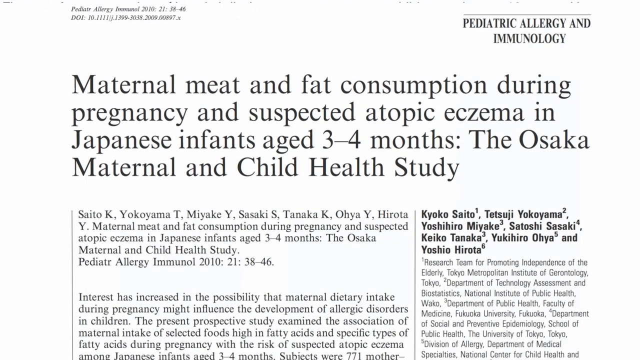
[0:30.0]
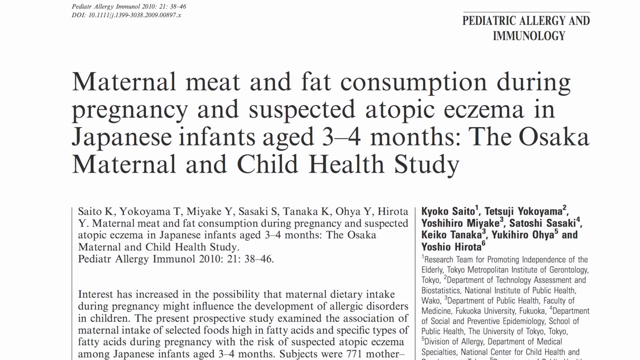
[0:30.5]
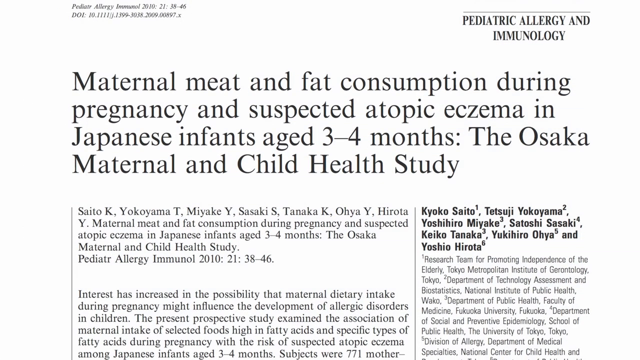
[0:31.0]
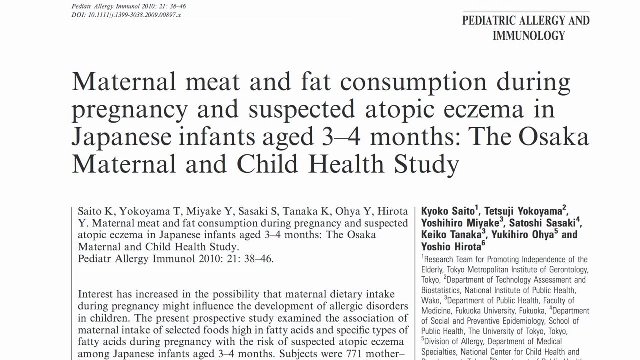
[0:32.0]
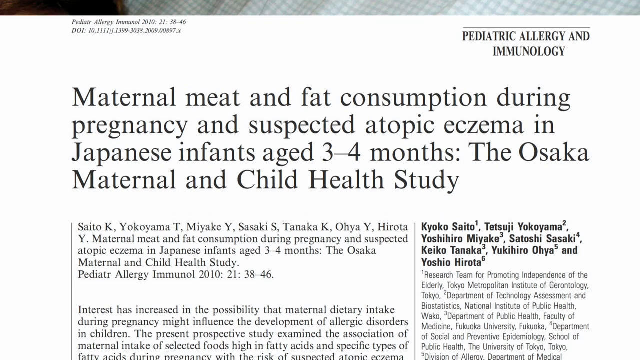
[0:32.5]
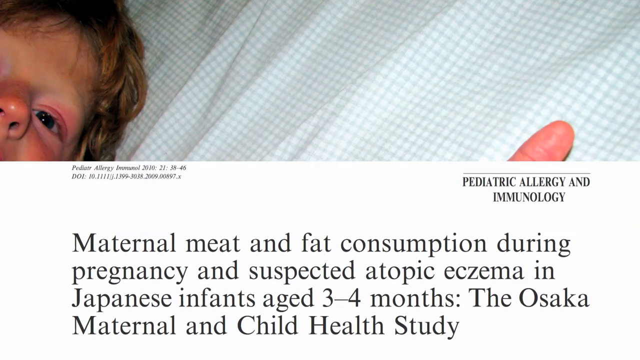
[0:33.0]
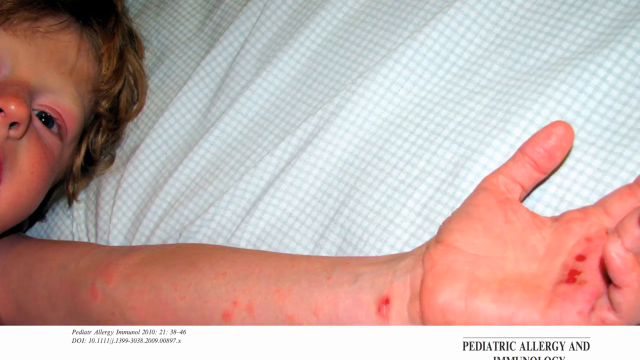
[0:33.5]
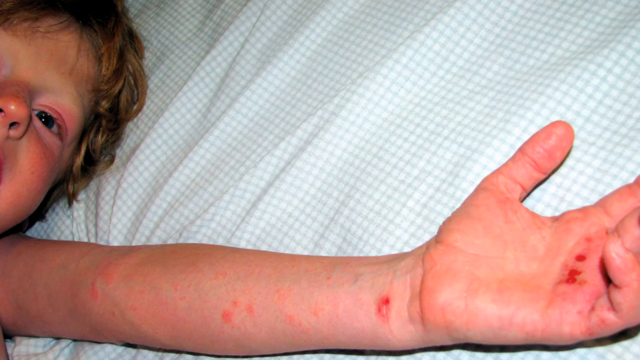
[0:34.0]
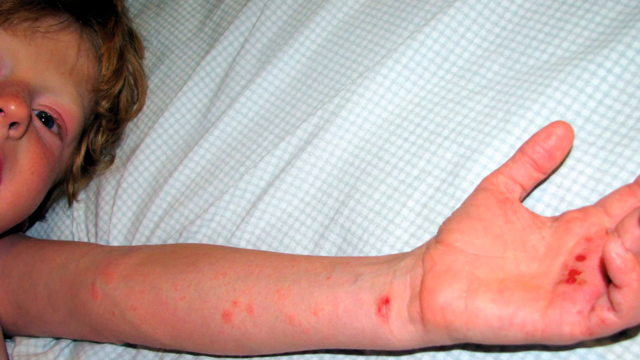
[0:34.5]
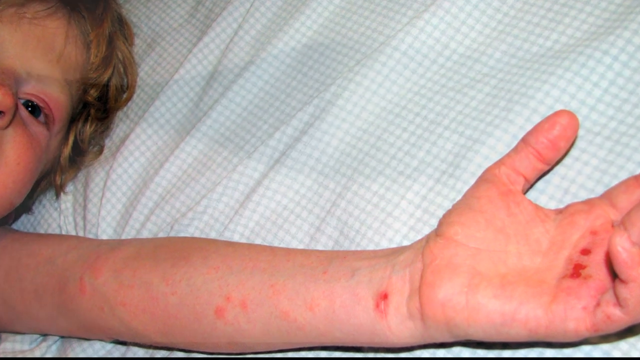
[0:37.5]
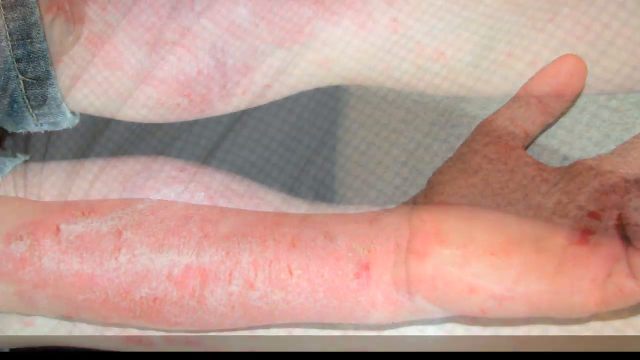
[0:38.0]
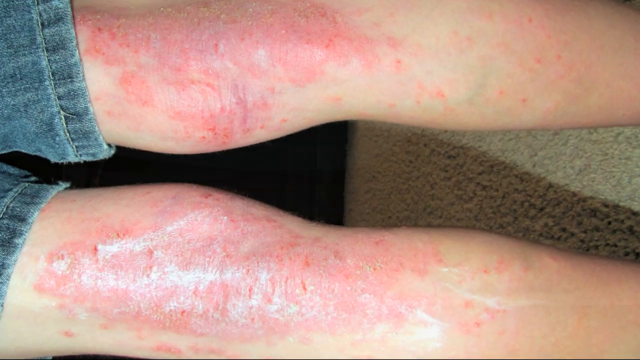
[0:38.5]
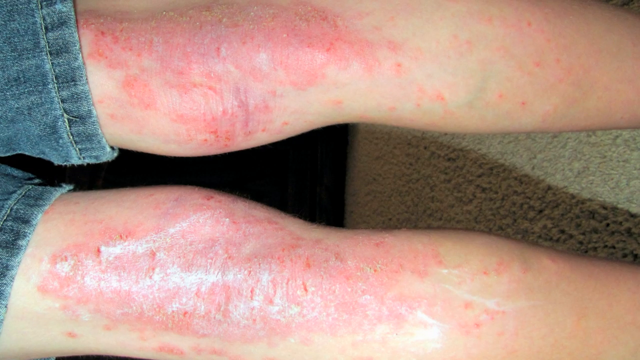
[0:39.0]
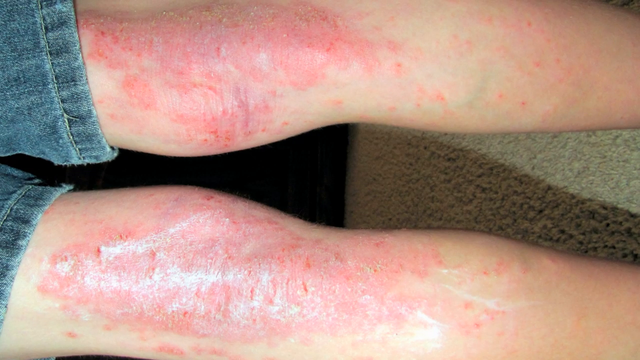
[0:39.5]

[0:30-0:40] The top of a journal page relating to allergies increasing is shown. In the top left-hand corner is the journal reference in small italic lettering, and in the top right-hand corner, in capital letters, is "paediatric allergy and immunology." The main headline reads "maternal meat and fat consumption during pregnancy and suspected atopic eczema in Japanese infants aged three to four months the Osaka maternal and child health study." Below it is a main body of text with a subheading summarizing the study, in a Times New Roman font. The video then changes to a photographic image showing part of the head, an eye and the hair of a blonde Caucasian child lying on a pillow. The child's arm is outstretched across the bottom of the photo, and on it are allergy-related sores, likely eczema.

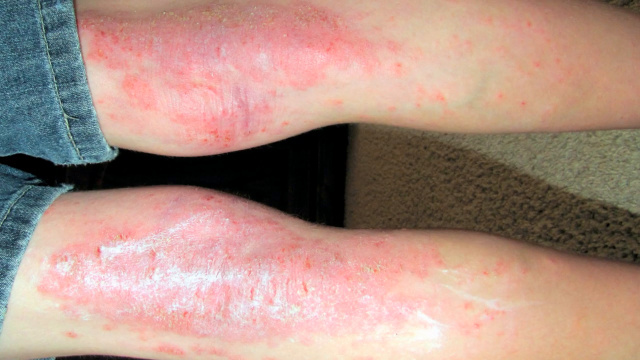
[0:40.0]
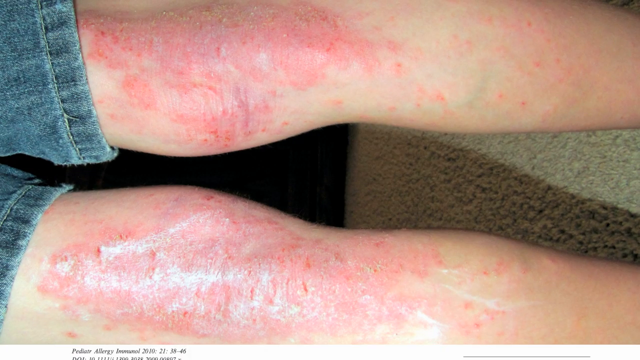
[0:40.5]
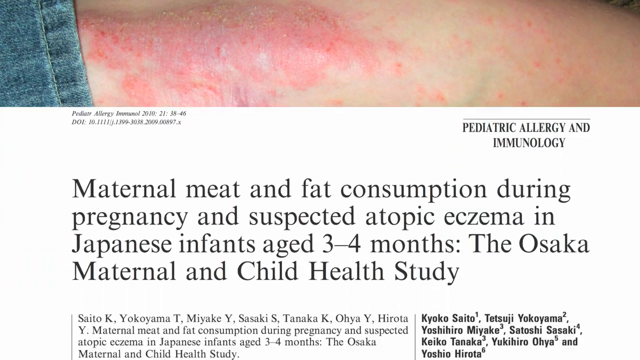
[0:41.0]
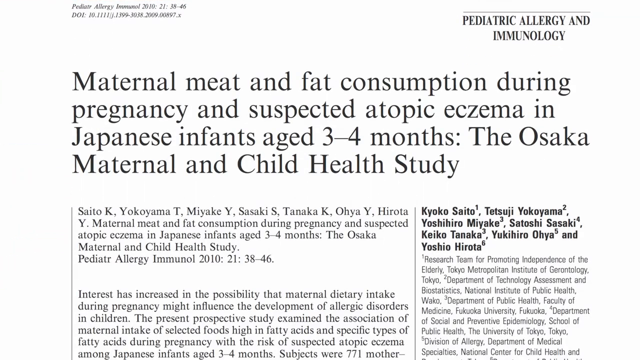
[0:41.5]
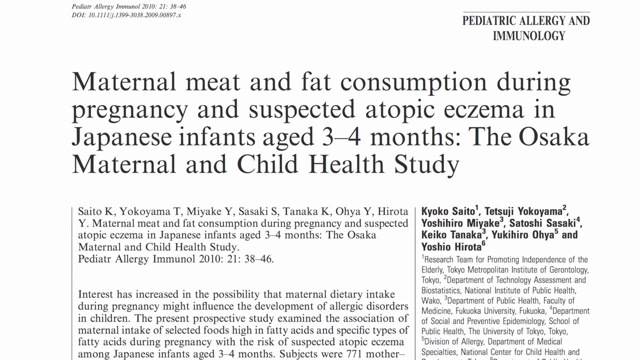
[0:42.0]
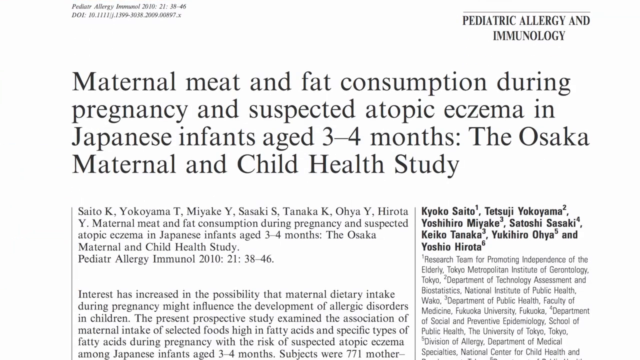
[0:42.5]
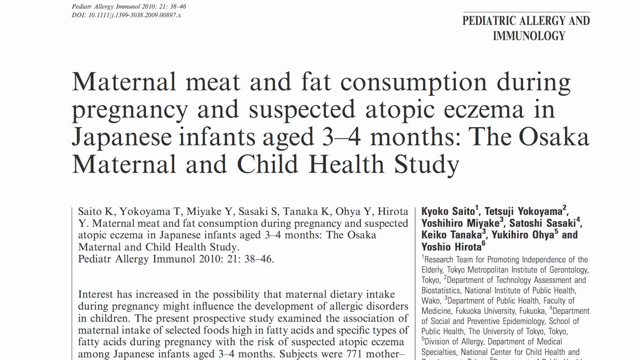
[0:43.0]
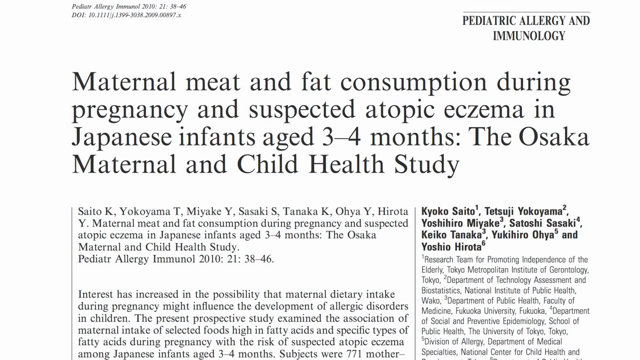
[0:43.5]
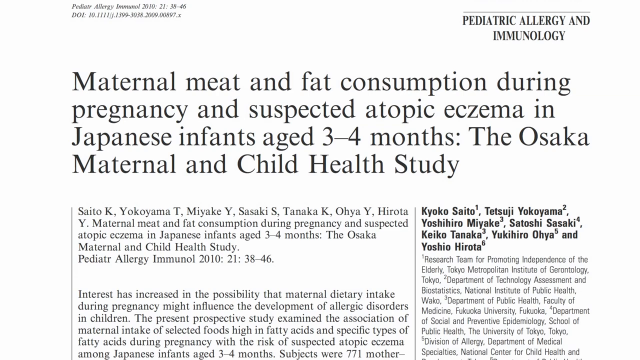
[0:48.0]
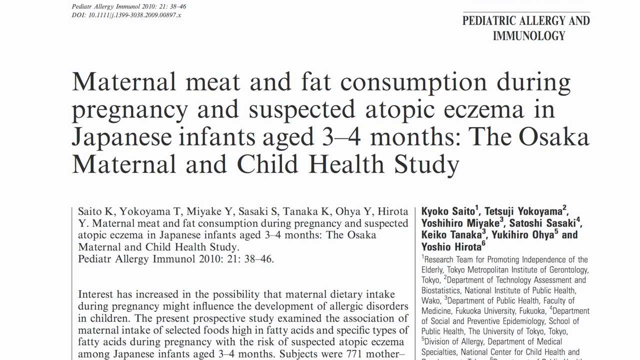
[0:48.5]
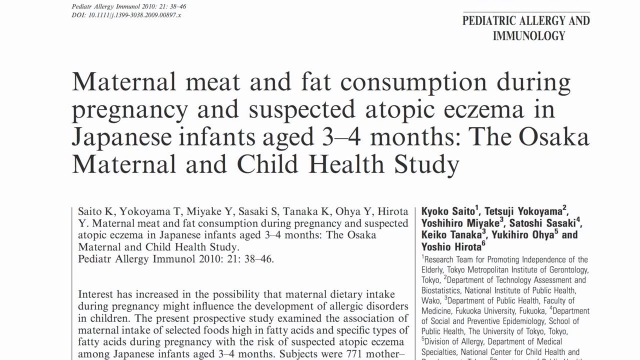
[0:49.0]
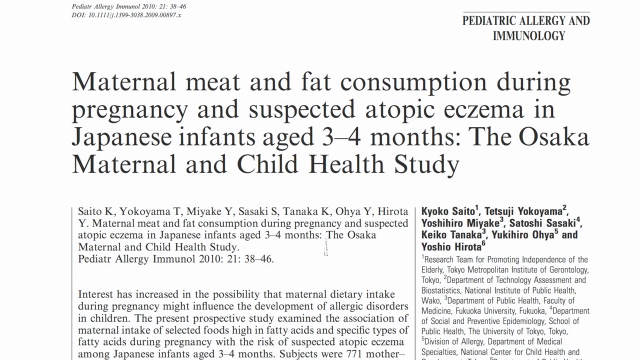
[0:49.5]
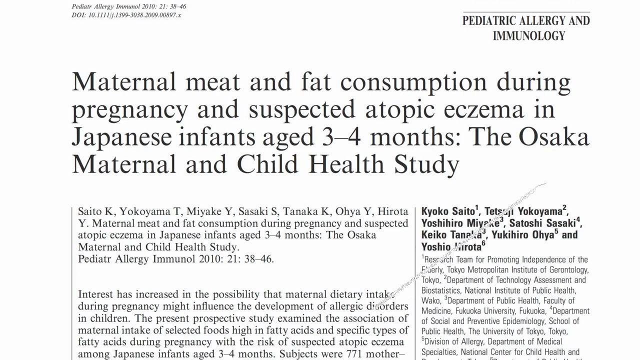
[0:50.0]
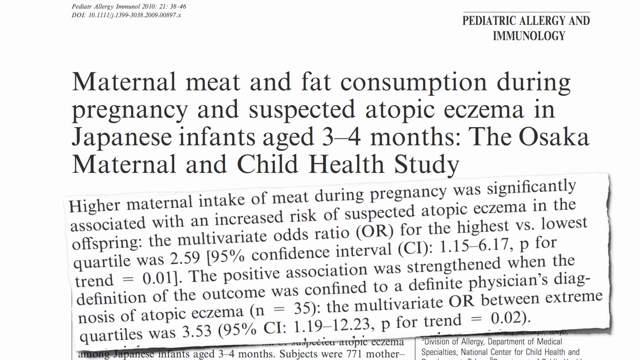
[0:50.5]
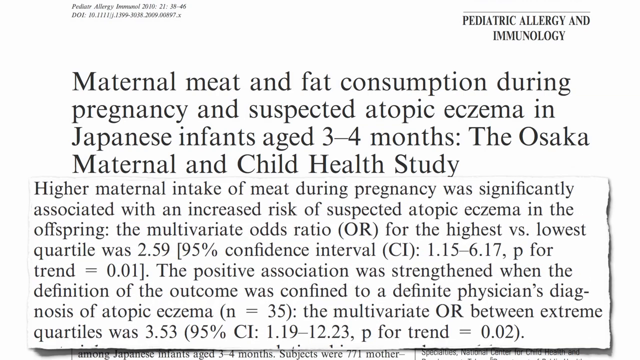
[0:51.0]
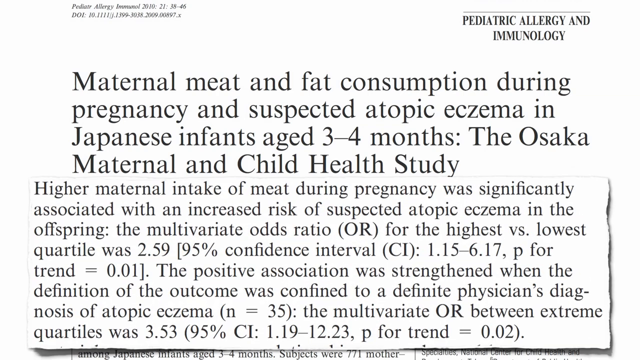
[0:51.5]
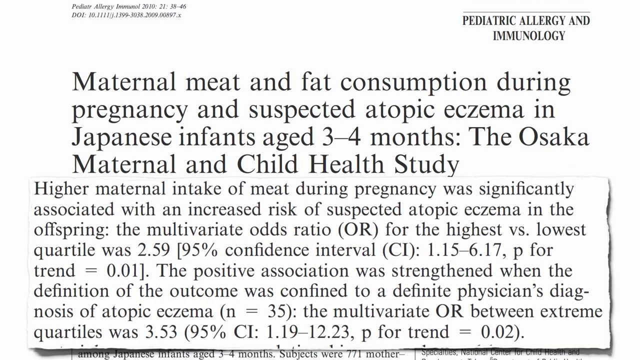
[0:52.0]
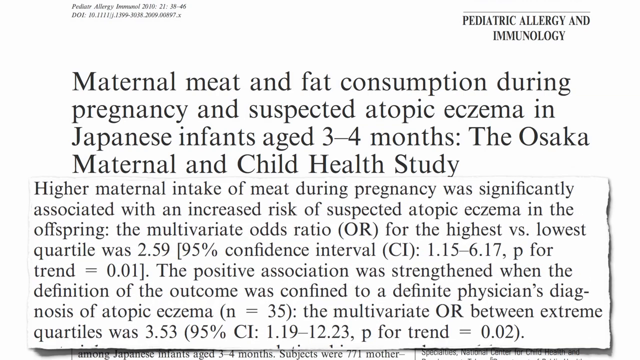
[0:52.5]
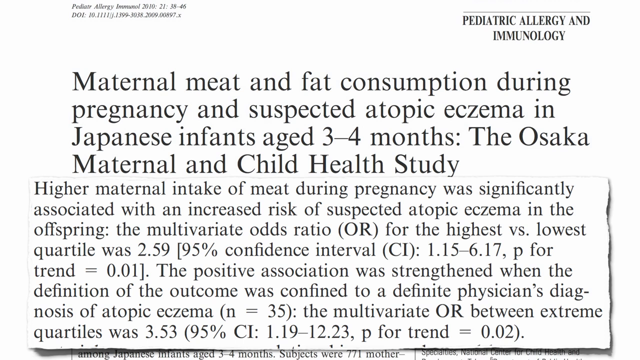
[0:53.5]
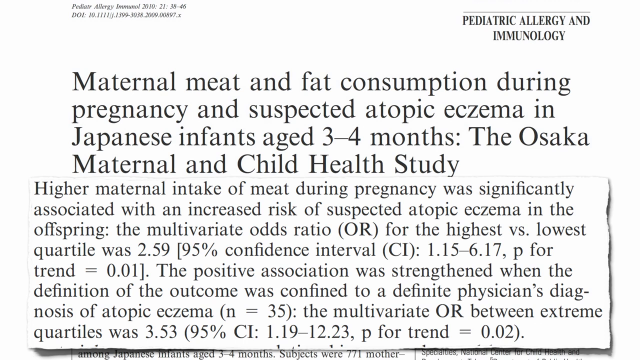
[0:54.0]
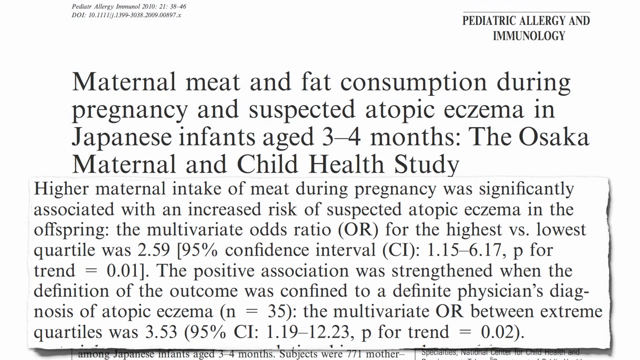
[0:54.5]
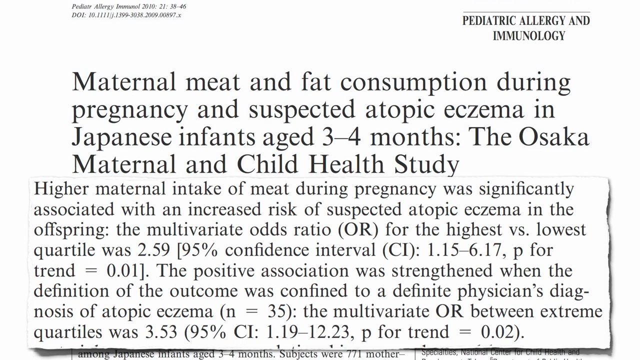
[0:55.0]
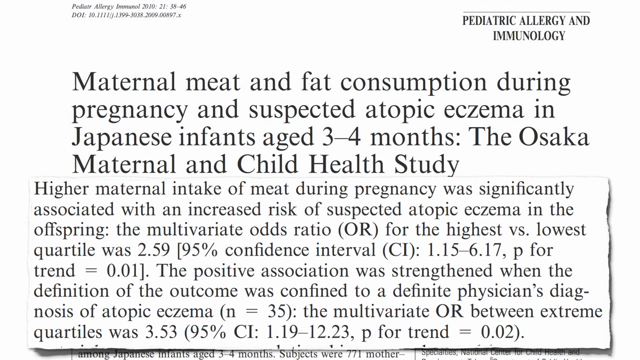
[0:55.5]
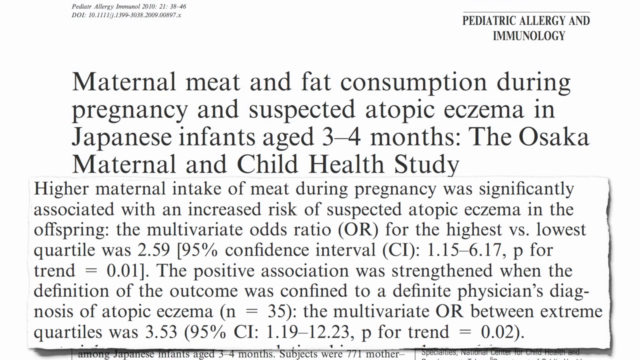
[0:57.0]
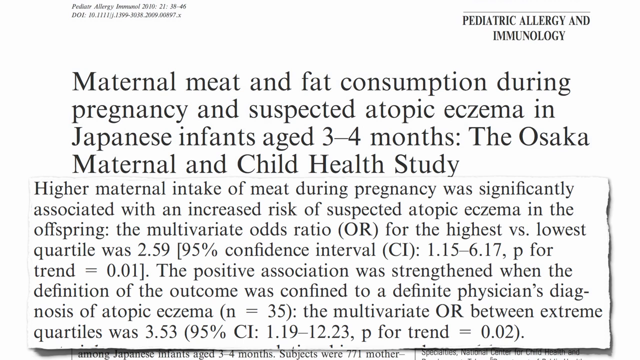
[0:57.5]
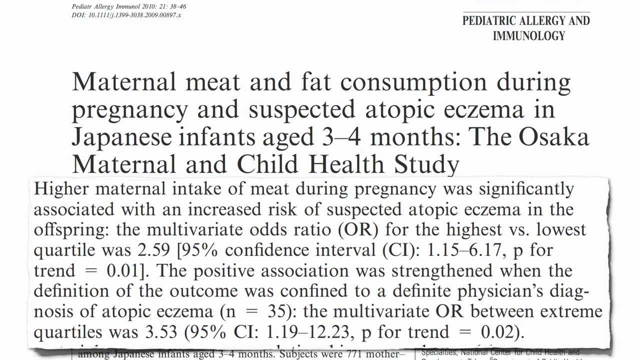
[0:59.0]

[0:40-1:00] A photographic close-up shows someone's legs. They have Caucasian skin and are wearing jean shorts that are just visible on the left of the image. Most of the image is made up of the legs, across the top and bottom of the photo. The thighs are very swollen, and the legs are covered in very sore, active red eczema, leaving the skin shiny in patches, peely in patches and spotty; it looks very sore and uncomfortable. Next comes a journal heading, with the journal details in small italic lettering in the top left-hand corner, the title "Pediatric Allergy and Immunology," and the headline "Maternal Meat and Fat Consumption During Pregnancy and Suspected Atopic Eczema in Japanese Infants Aged 3-4 Months, the Osaka Maternal and Child Health Study." Below that is a subheading of information about the article. Superimposed on this is a pop-up box with facts from the study, stating that "higher maternal intake of meat during pregnancy was significantly associated with an increased risk of suspected atopic eczema," followed by various factual information supporting this finding.